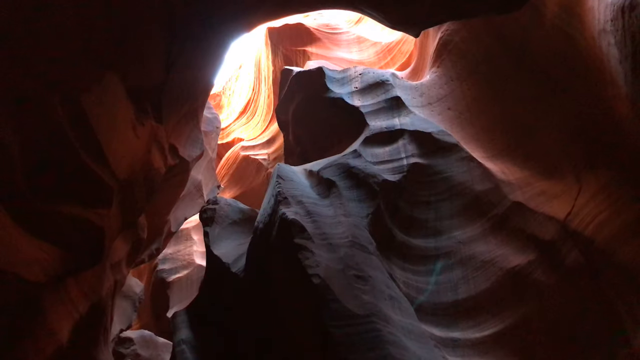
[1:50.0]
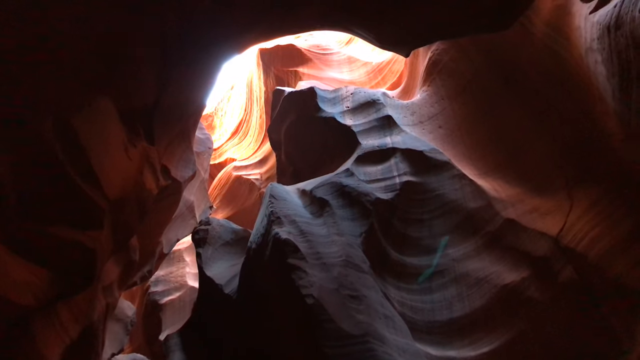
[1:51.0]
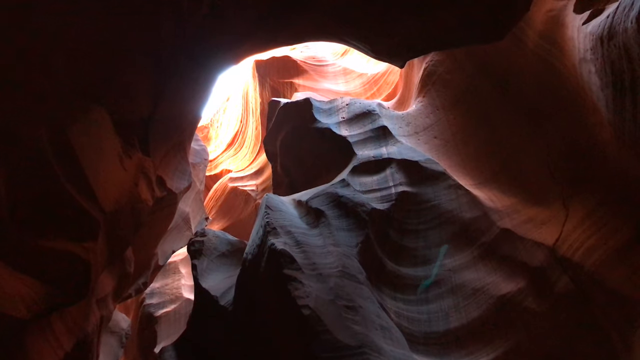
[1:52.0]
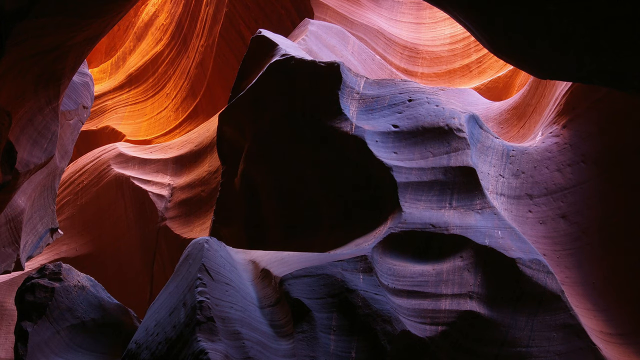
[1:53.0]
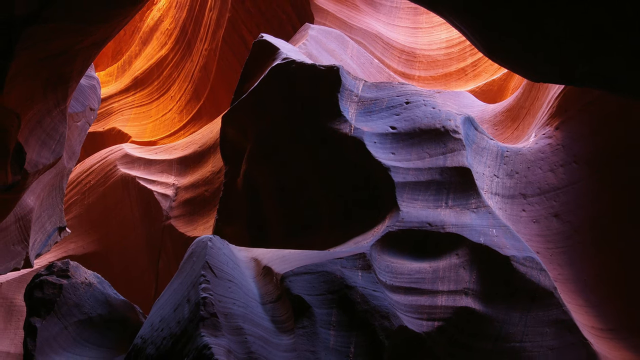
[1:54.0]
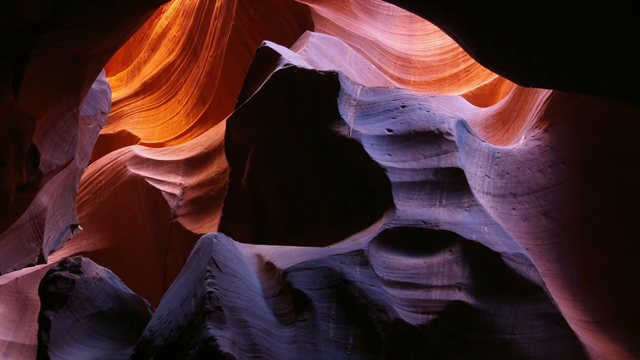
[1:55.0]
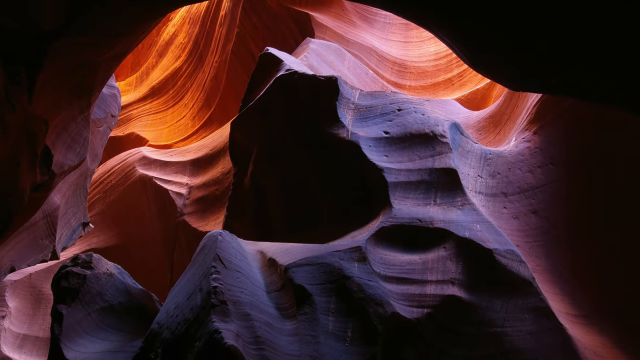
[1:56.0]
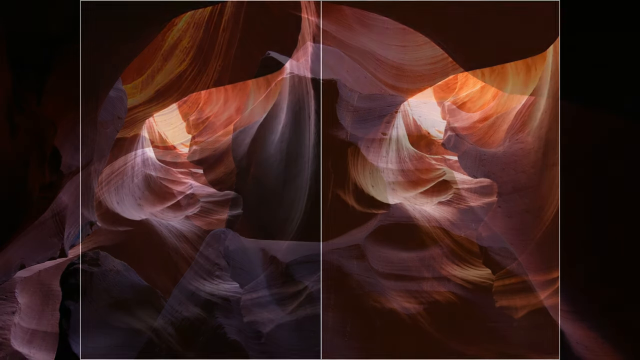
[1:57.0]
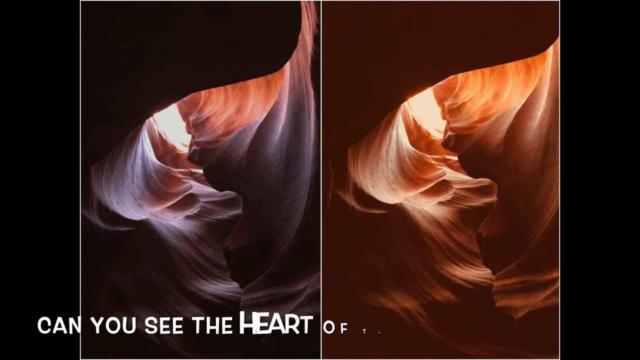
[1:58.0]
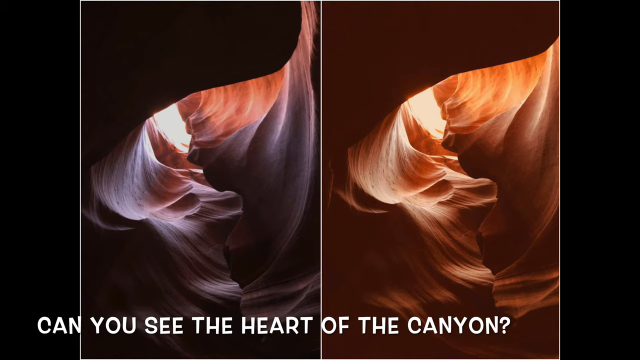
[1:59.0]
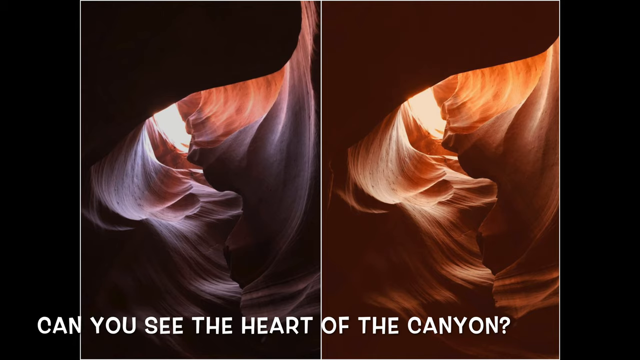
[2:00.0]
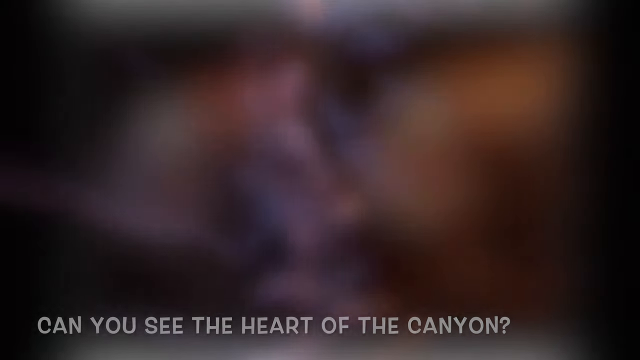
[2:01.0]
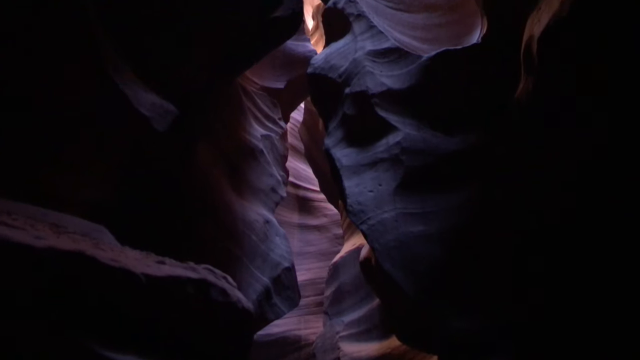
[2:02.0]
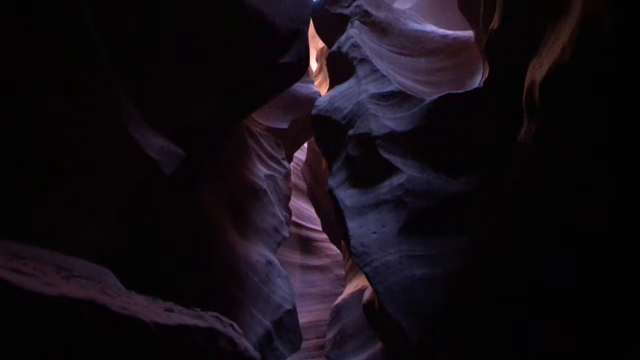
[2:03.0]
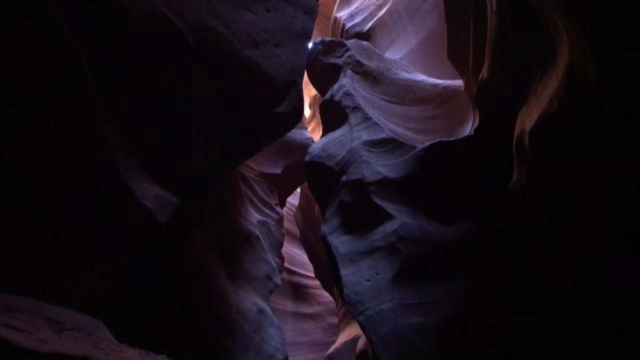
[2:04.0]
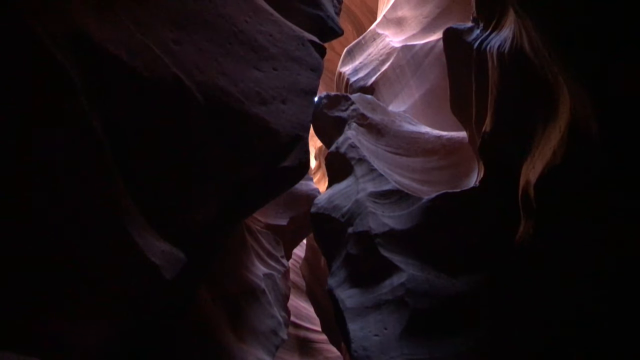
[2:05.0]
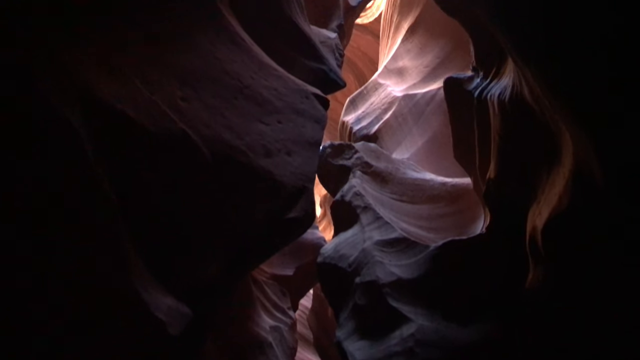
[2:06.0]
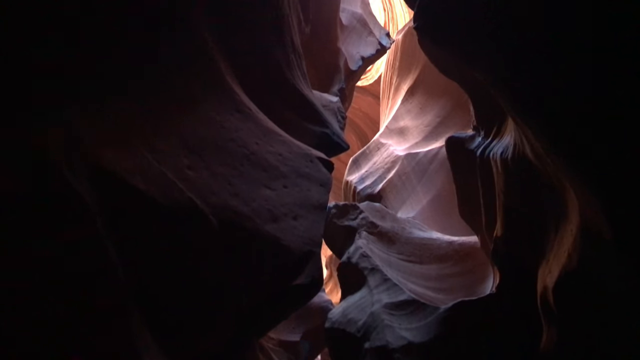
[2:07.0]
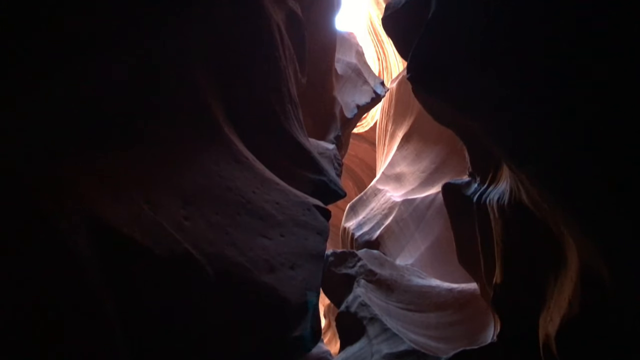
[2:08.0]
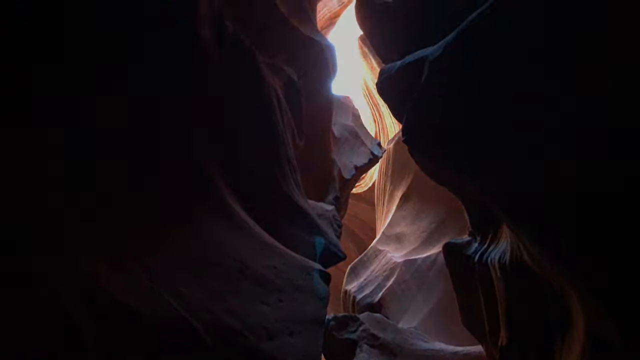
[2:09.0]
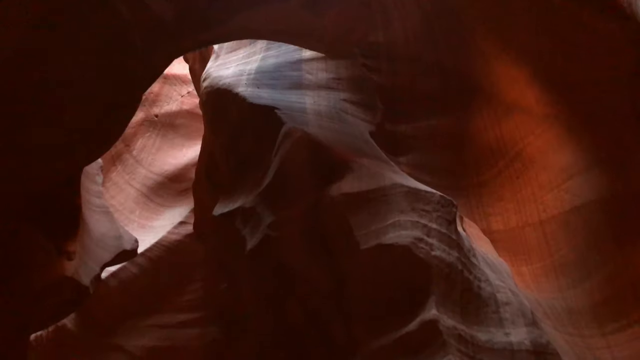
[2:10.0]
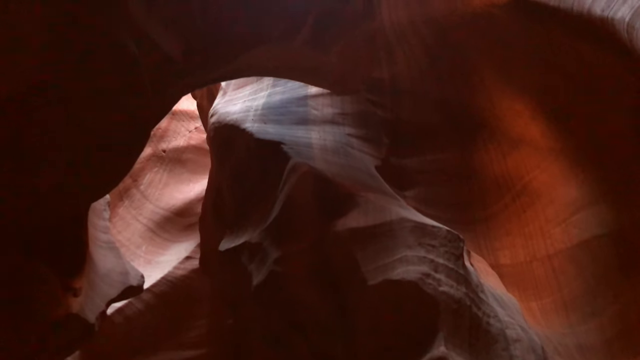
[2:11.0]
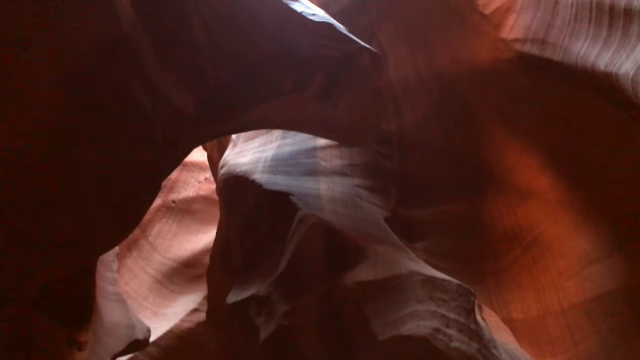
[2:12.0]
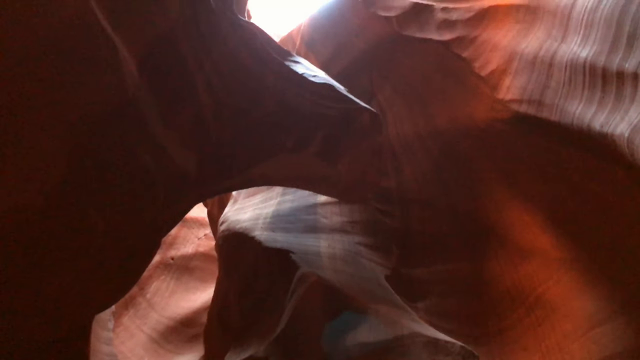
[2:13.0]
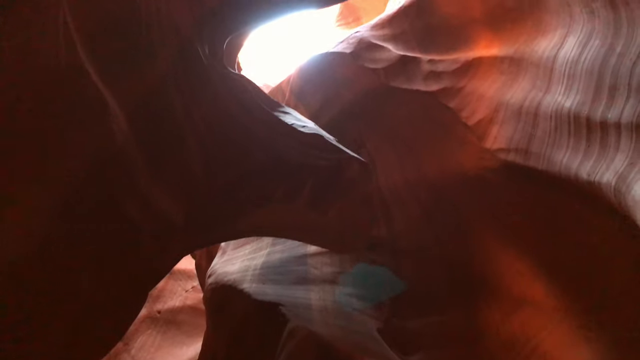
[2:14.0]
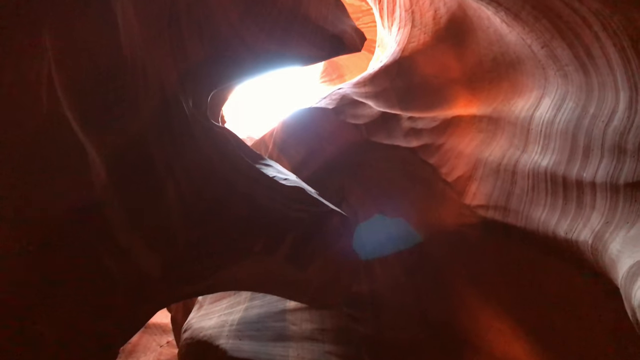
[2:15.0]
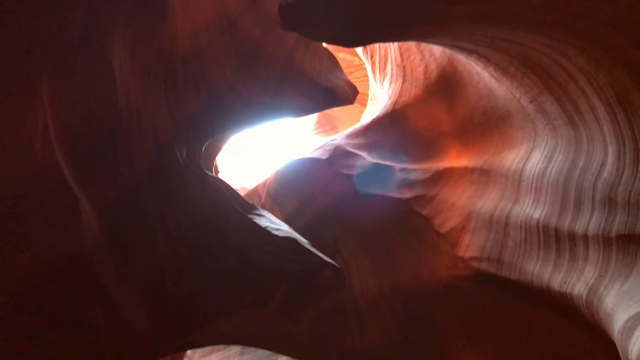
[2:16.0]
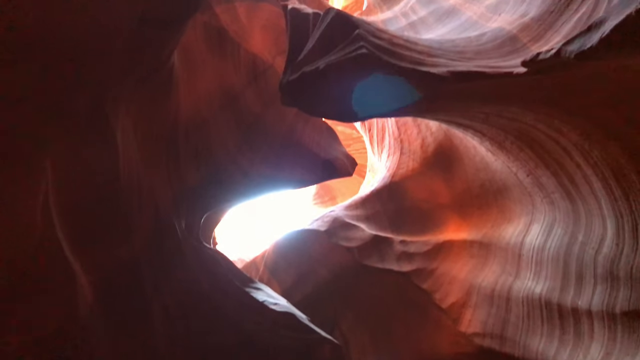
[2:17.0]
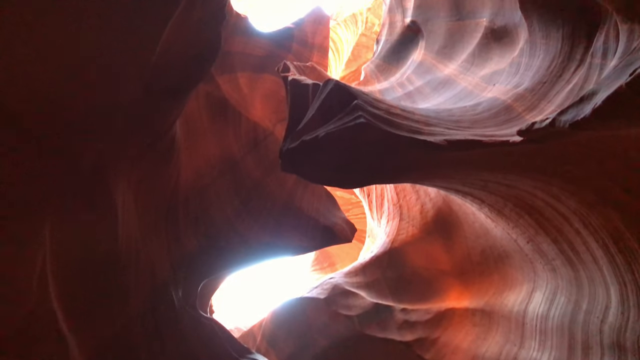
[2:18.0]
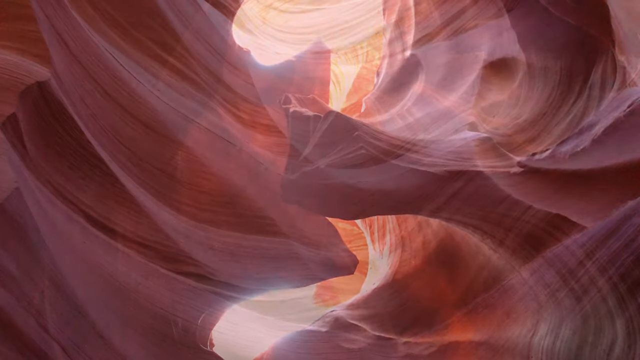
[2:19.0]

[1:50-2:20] The view takes in the sky, the walls and the roof, where light penetrates into the canyon. Inside it is dark, while bright light enters from outside. As the camera zooms in, other parts of the walls appear, with pillars and pyramid-like forms making different shapes. Inside the cave are smooth rocks on which people can stand, with bright light coming from above. The camera shifts, and a text appears at the bottom of the screen, apparently about the heart of the canyon. Two images appear: the one on the left is dark and the other is brownish, and the canyon can be seen through its crevices. Another picture of the canyon shows dark rocks with many crevices and paths to follow through the cave. The camera moves along the cave to the roof.